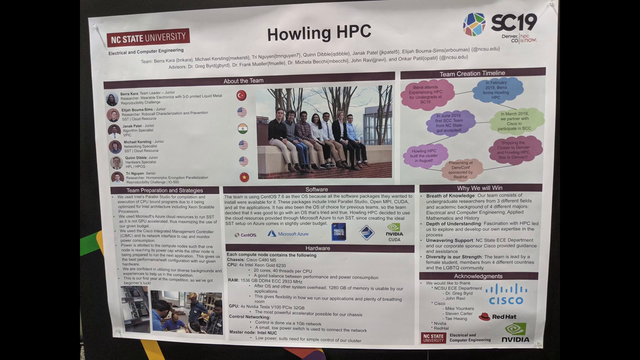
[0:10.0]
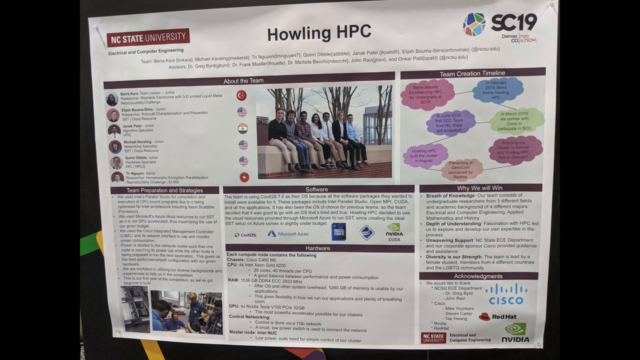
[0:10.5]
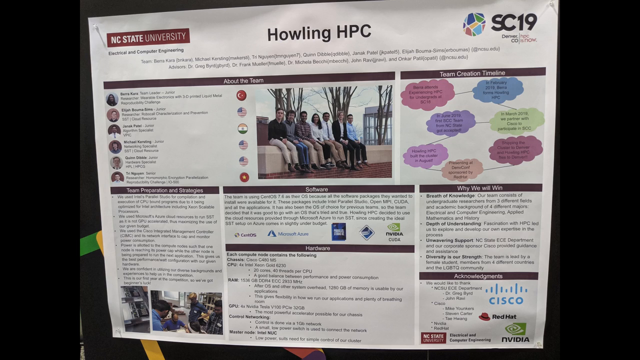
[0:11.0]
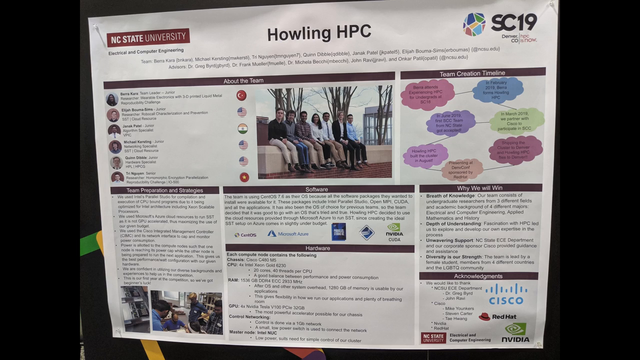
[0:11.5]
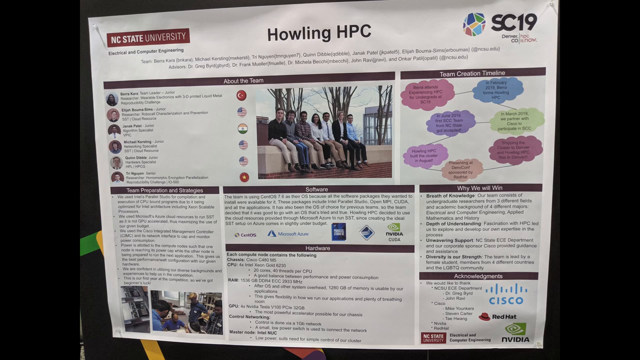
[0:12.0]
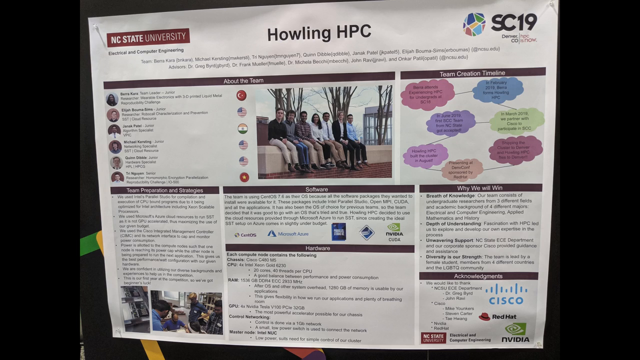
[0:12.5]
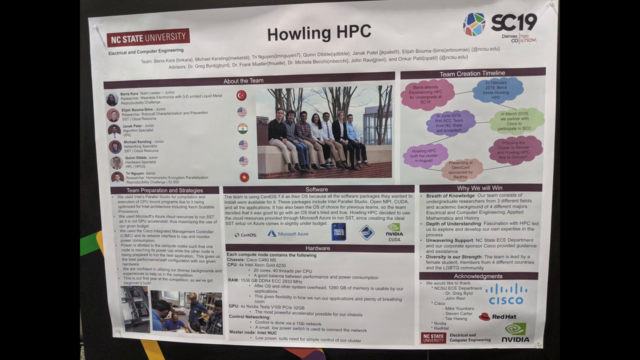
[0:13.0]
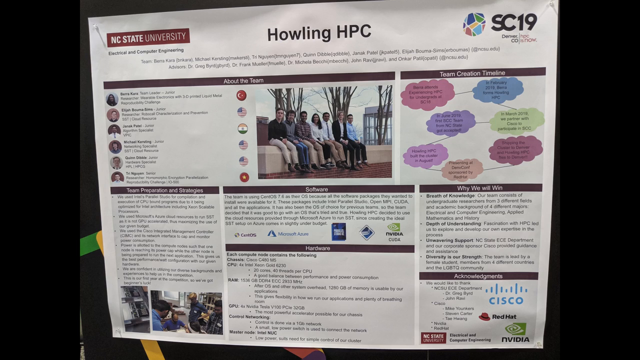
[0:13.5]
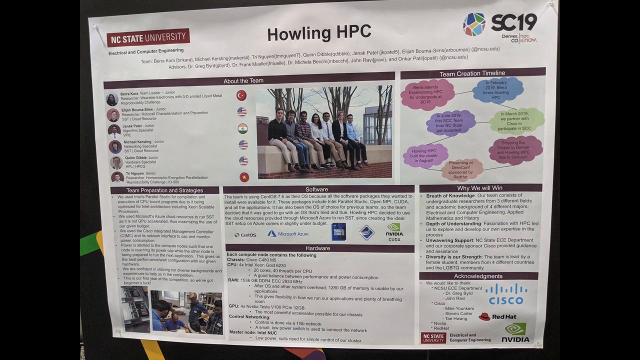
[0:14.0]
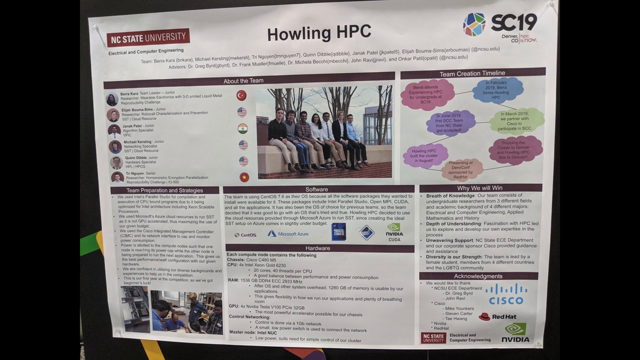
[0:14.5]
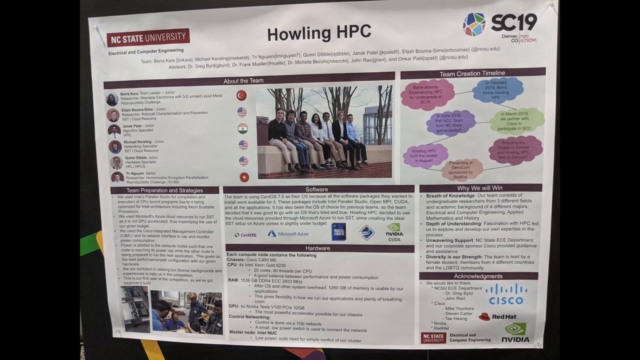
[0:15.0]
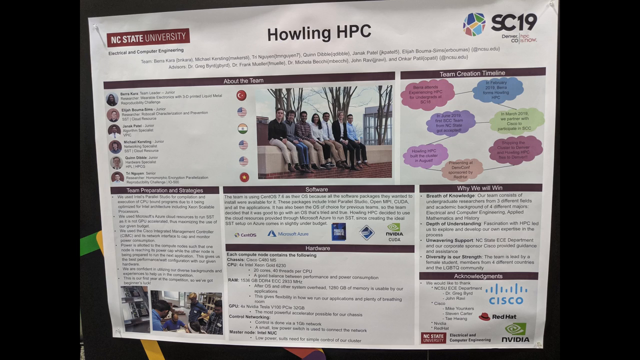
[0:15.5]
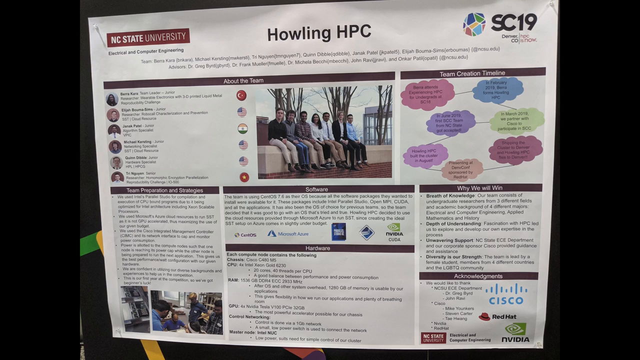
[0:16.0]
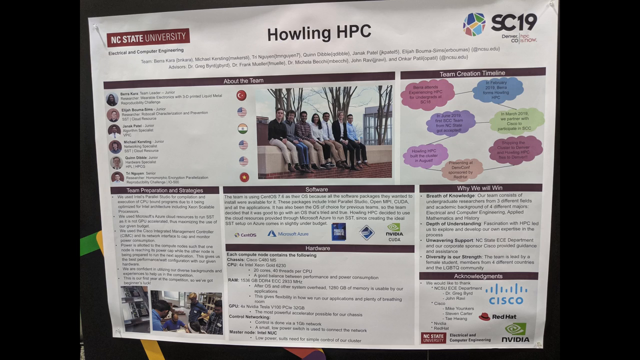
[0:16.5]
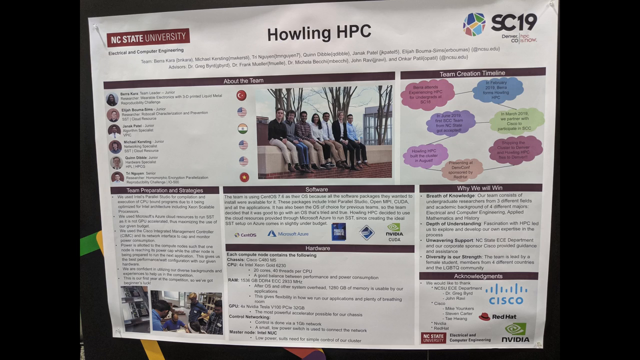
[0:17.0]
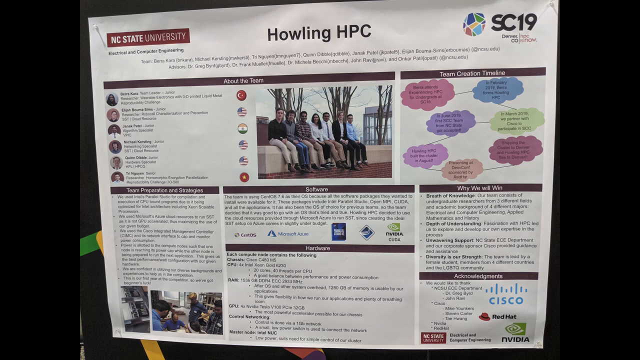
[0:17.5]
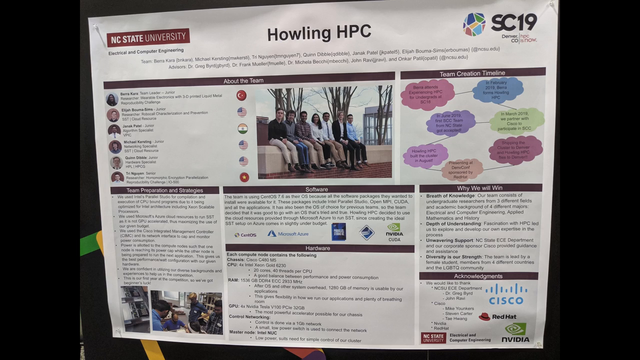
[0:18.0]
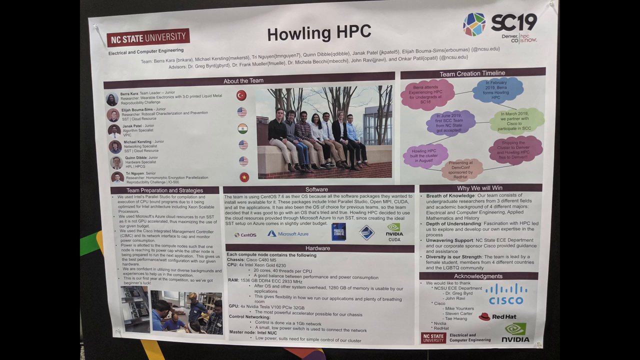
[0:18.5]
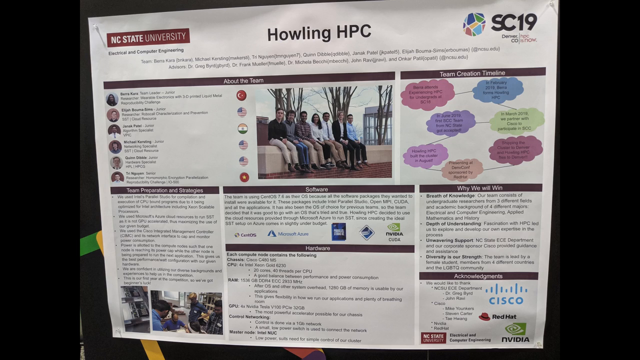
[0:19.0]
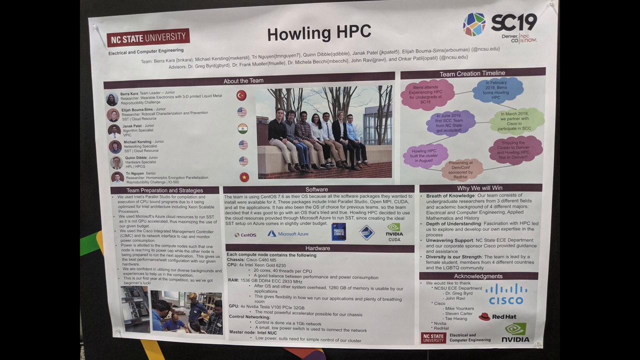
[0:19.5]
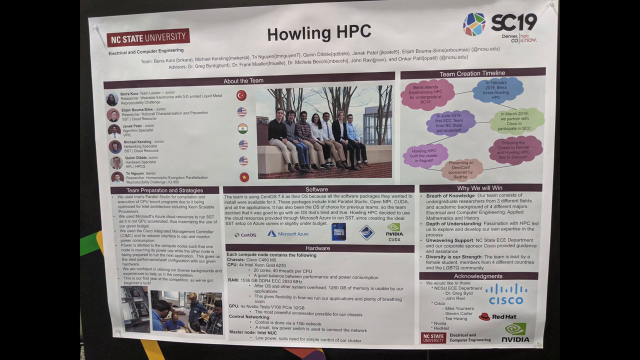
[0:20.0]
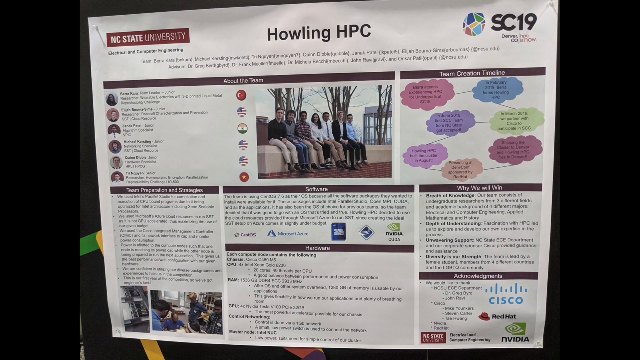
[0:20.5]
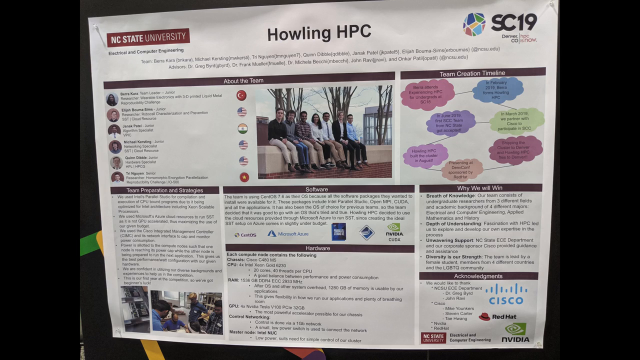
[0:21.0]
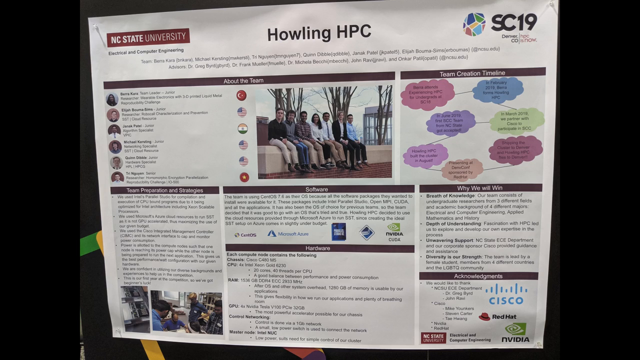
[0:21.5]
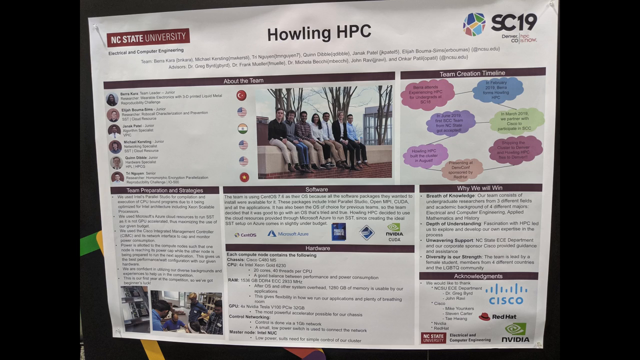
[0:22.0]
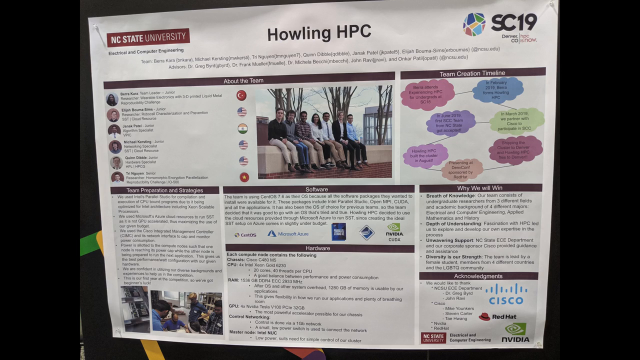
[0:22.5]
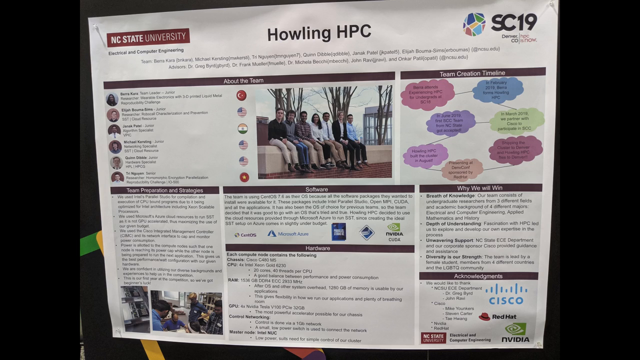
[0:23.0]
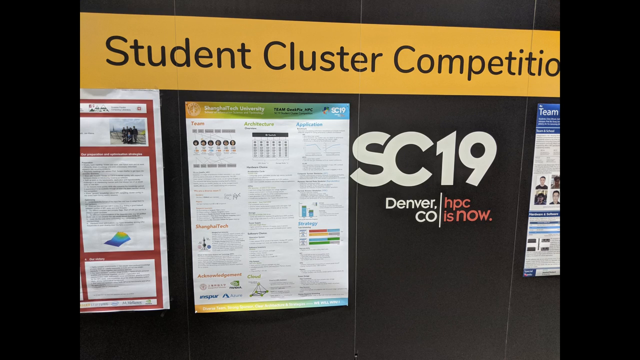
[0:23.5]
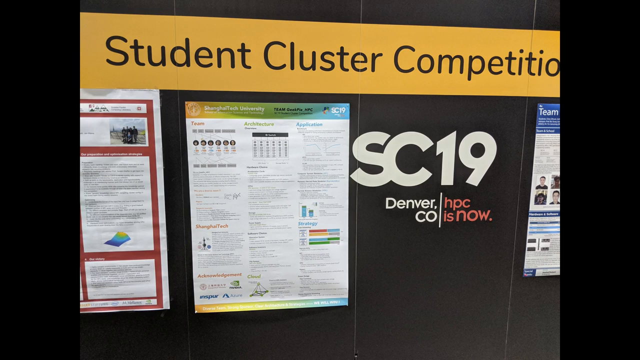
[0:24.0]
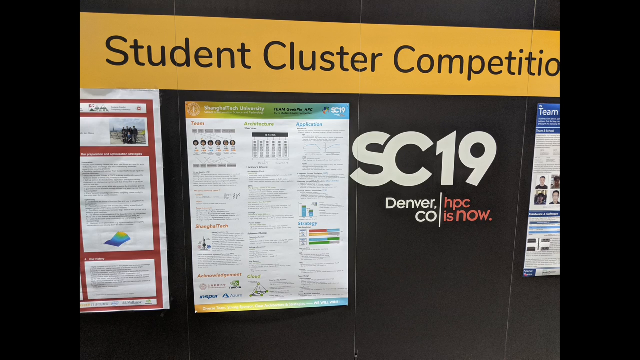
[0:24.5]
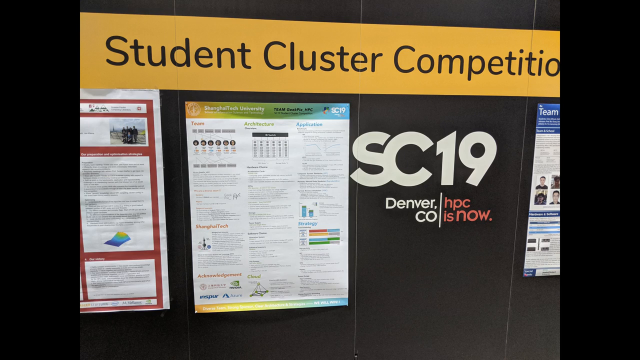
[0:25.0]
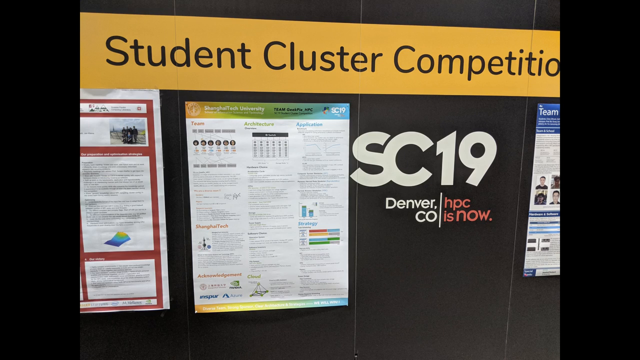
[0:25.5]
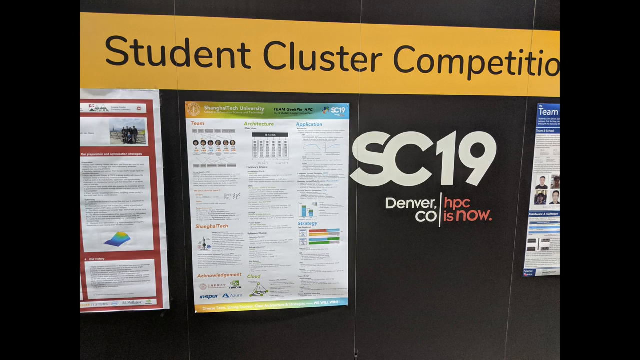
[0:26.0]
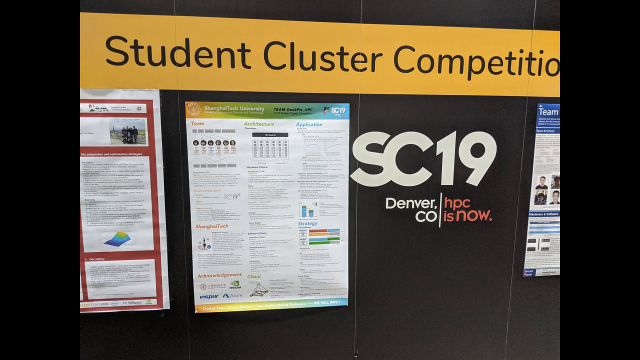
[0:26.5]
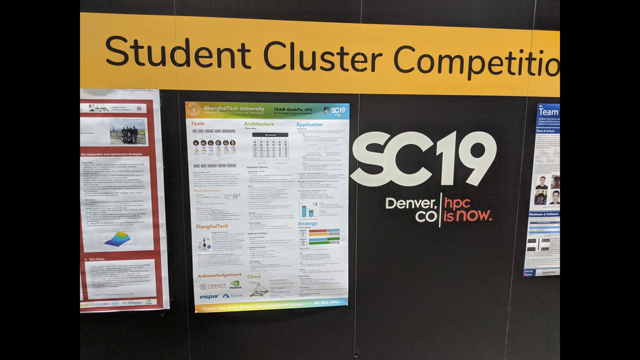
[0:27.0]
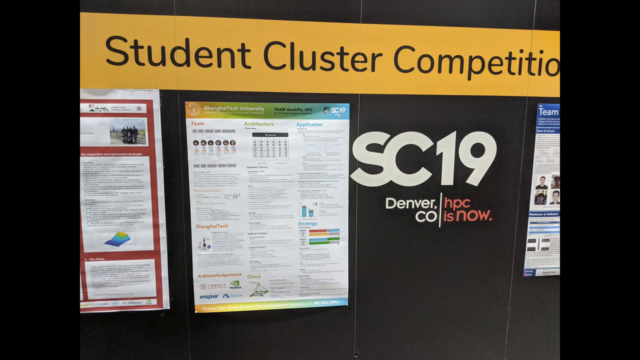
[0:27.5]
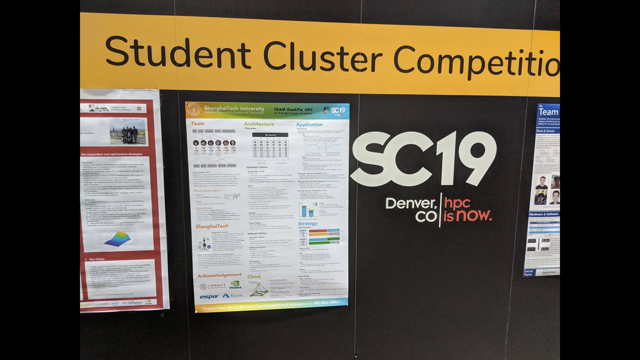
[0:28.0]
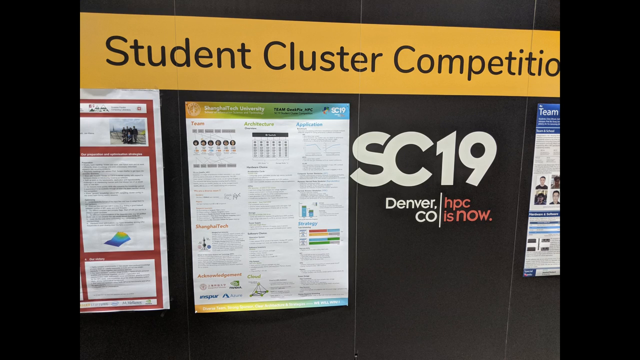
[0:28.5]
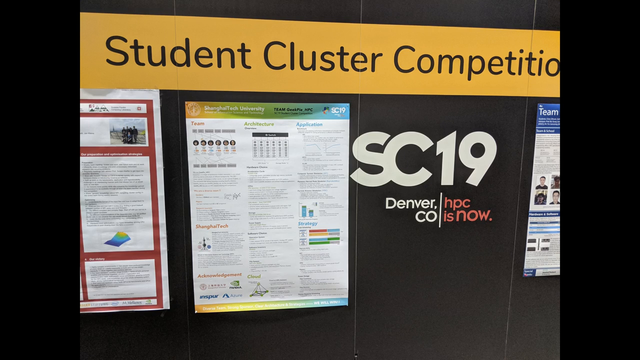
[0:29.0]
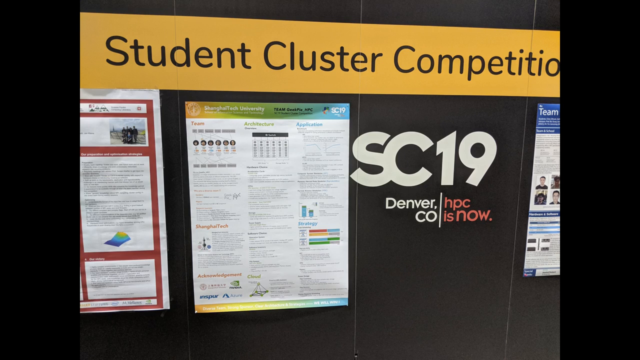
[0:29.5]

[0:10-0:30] A close-up shows a news article that appears to be printed from North Carolina State University. The top center section has black bold text that says "Howling HPC", and in the top right corner there is a colorful orb-like icon with the letters "SC19". The page itself stays the focal point. Brand names appear at the bottom, including acknowledgments for Red Hat, NVIDIA and Cisco, and it appears the team shown on the page had some sort of accomplishment. Pictures in the bottom left corner show some of the team working. The next shot moves to pages posted on a wall with a black background. At the top left of this display panel is a yellow banner with black text that says "Student cluster competition", though the N in "competition" is cut off on the far right side.